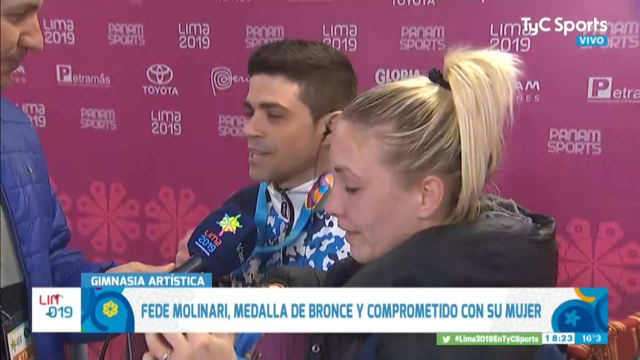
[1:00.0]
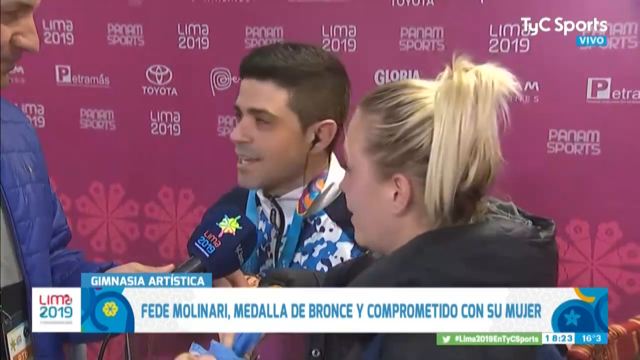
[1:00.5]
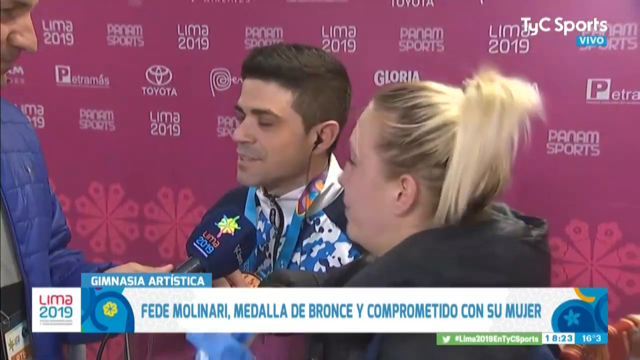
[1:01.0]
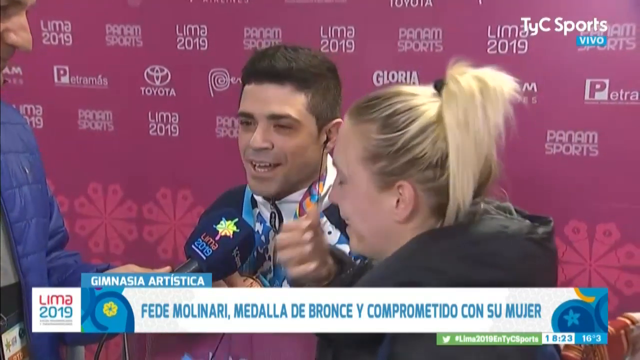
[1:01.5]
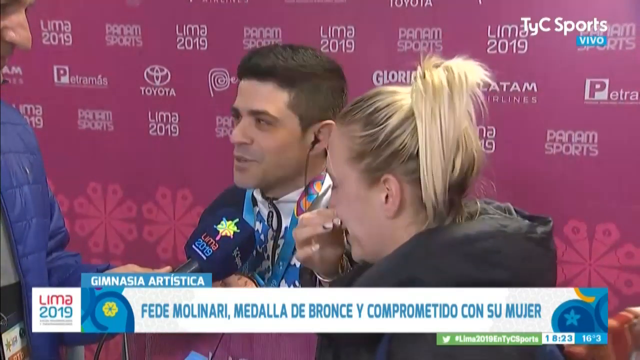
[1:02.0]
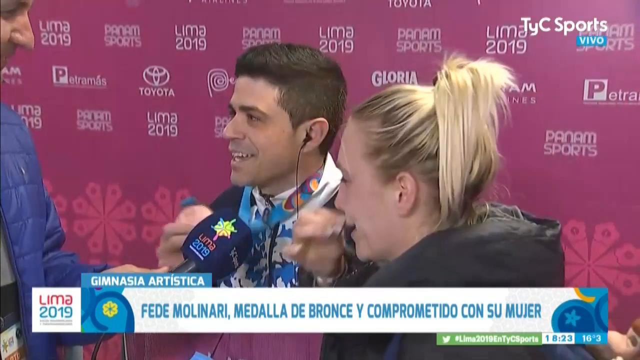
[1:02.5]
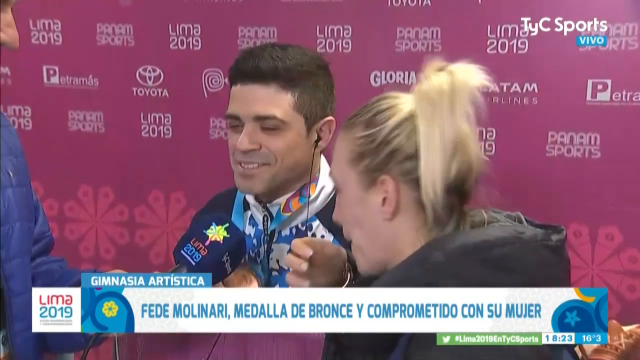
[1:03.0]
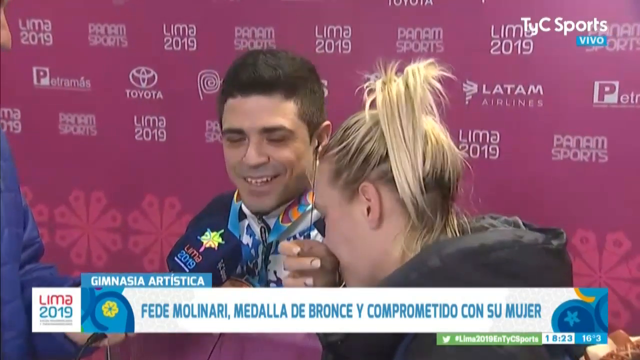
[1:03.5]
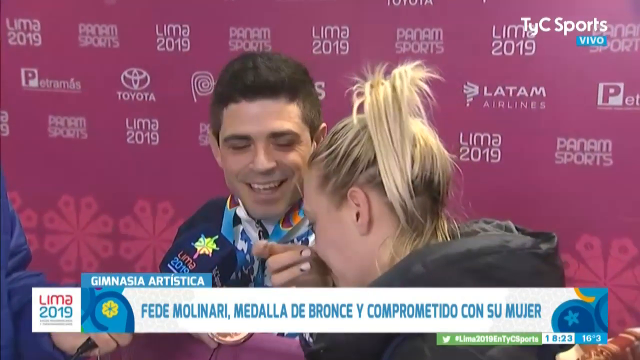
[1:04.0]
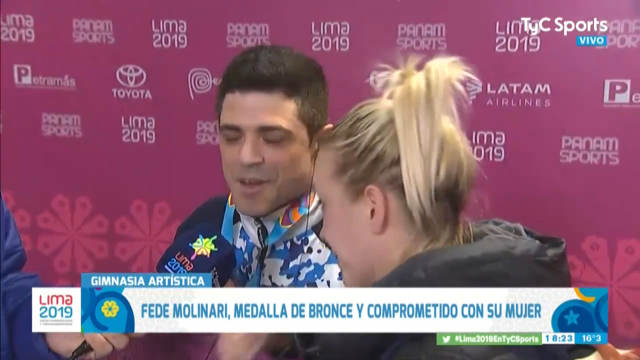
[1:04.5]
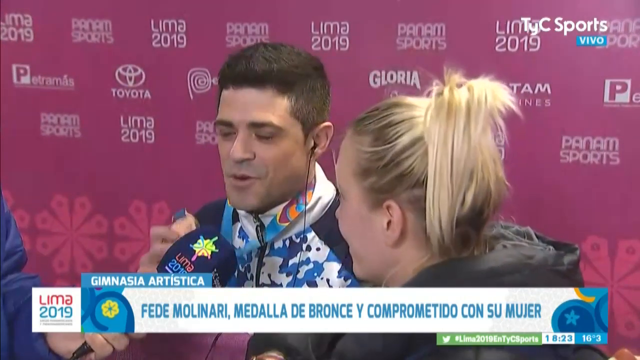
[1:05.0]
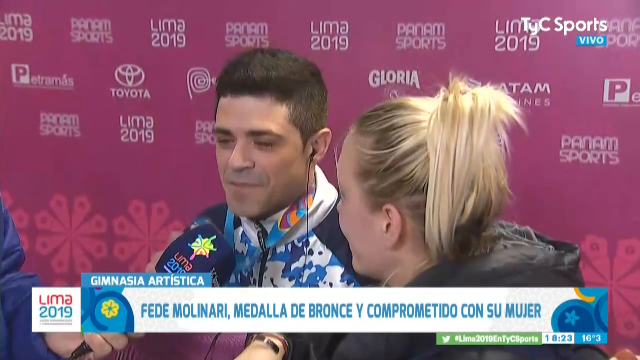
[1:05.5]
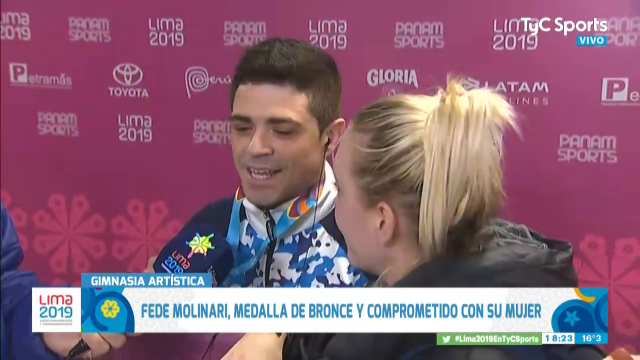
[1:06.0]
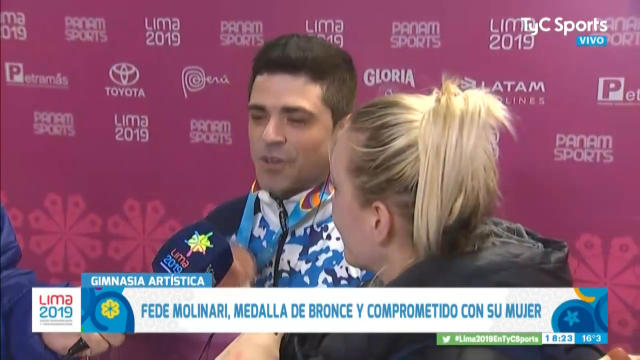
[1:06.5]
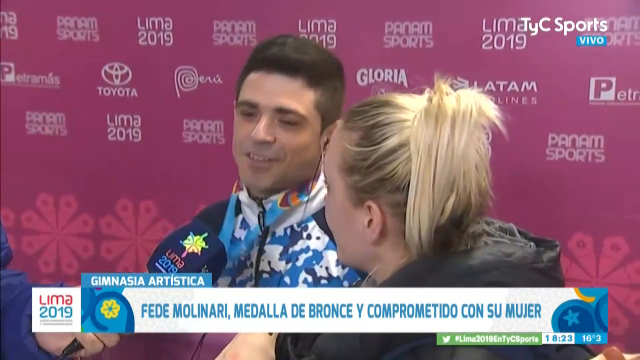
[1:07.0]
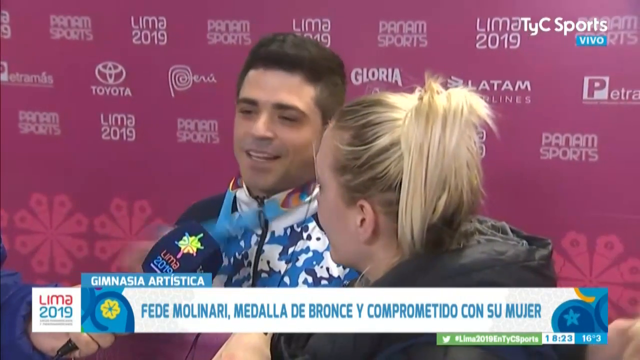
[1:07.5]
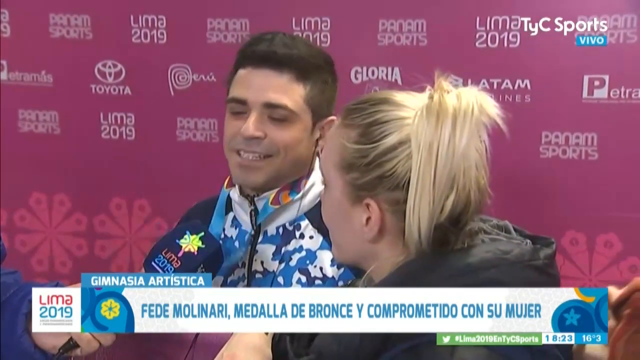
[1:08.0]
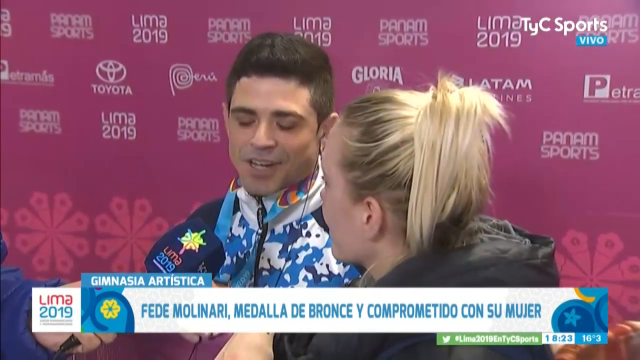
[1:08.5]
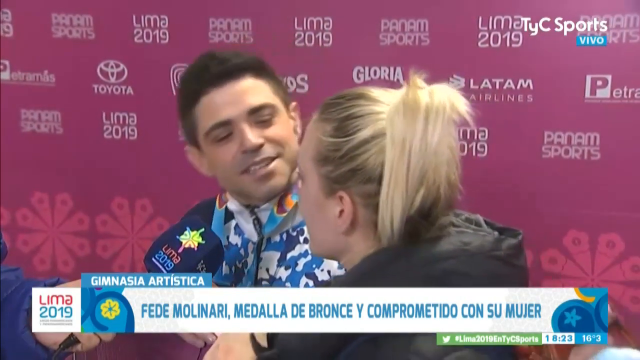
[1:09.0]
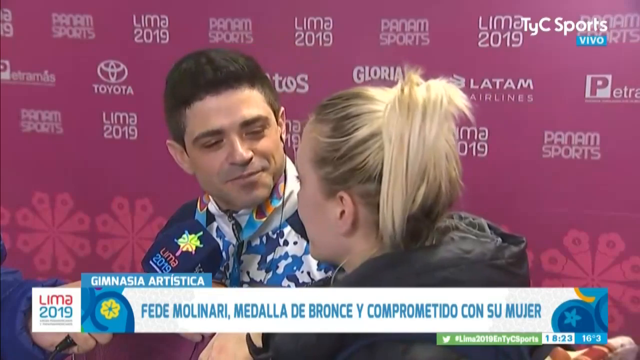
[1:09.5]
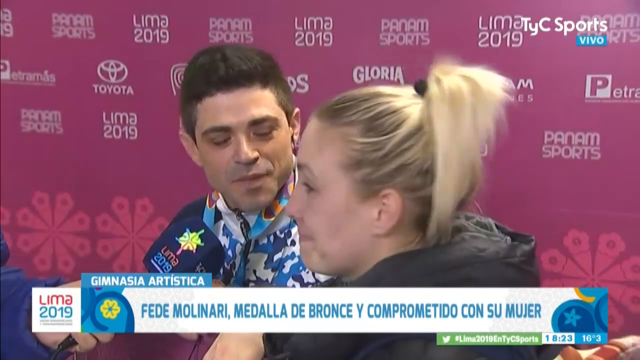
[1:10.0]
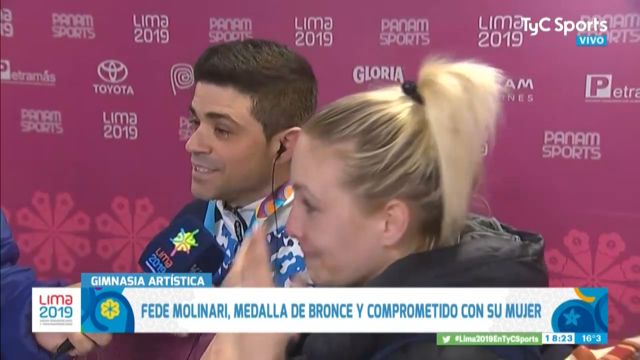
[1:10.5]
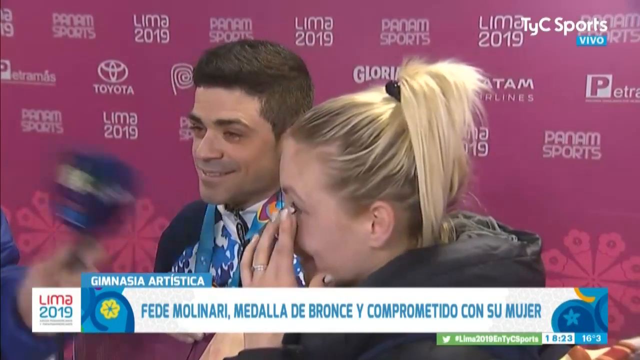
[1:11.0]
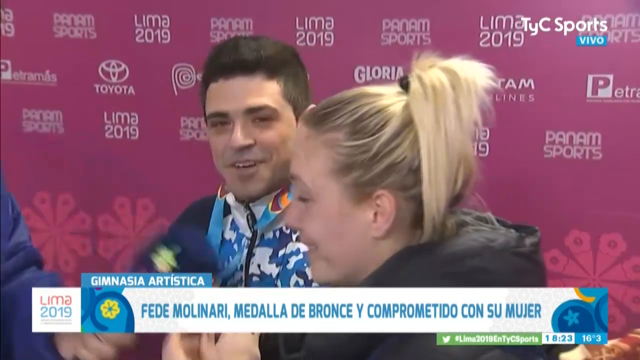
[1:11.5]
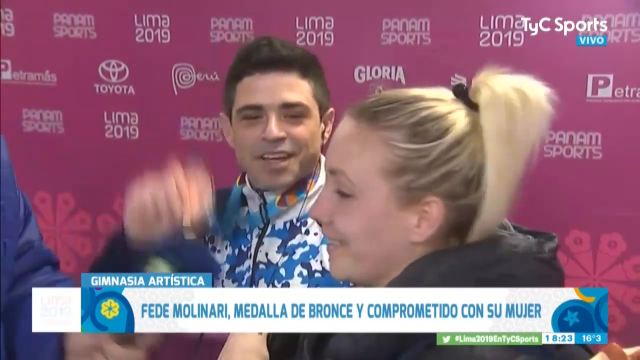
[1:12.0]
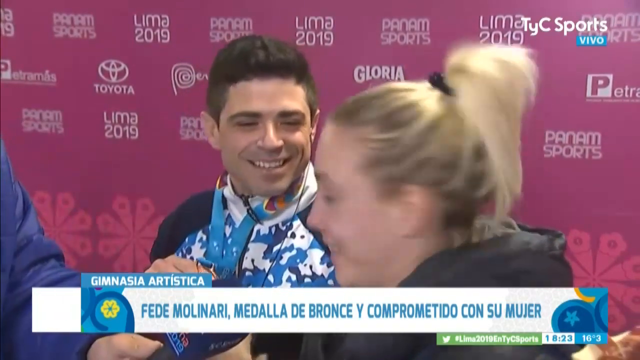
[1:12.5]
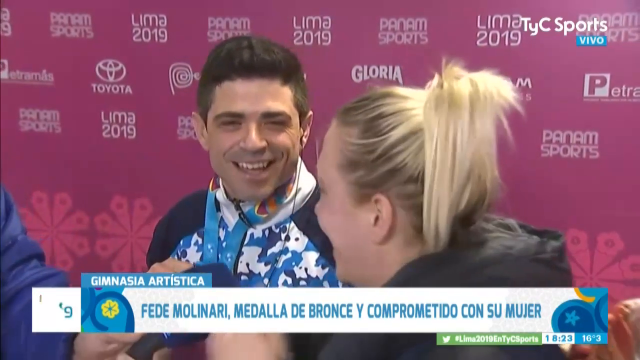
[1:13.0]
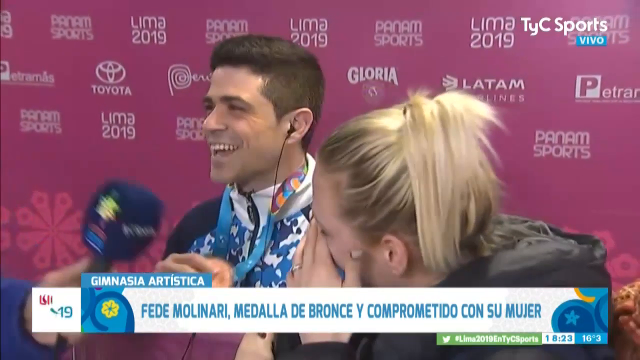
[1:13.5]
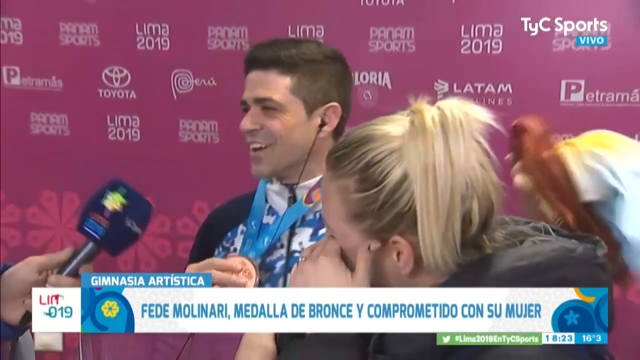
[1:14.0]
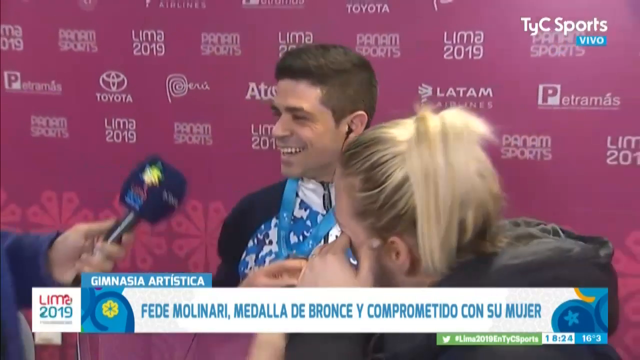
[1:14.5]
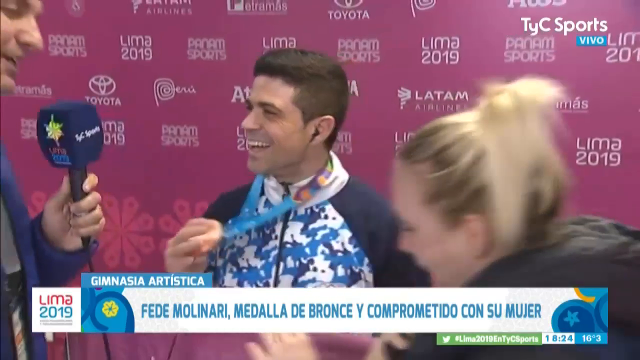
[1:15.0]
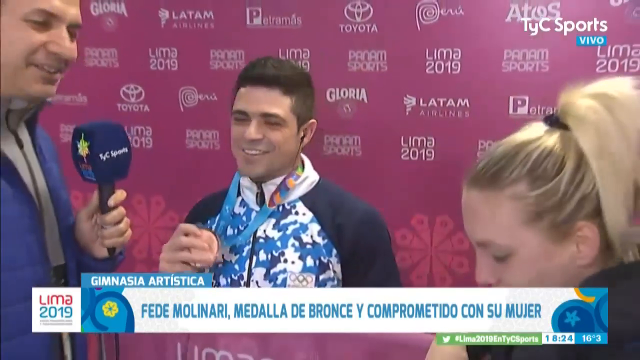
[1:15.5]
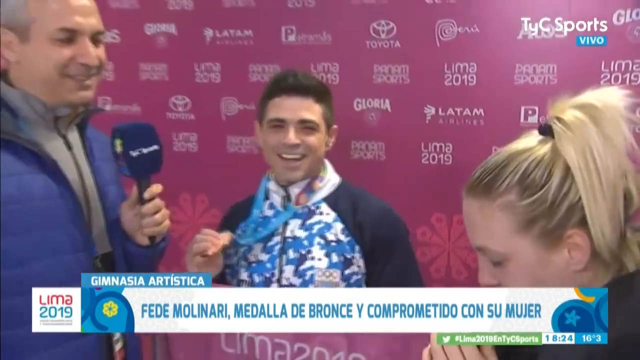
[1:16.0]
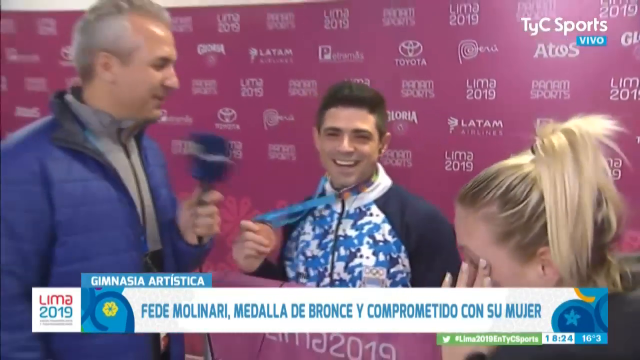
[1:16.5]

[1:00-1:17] An interview is in progress. A man talks on camera with a microphone in front of him, and he keeps waving around a gold medal in his hand, which he is putting around his neck. A woman stands next to him, appearing to be his wife or girlfriend; she is crying tears of joy and keeps wiping her eyes as he is interviewed. Toward the end, the man has a huge smile on his face and holds the gold medal up in his right hand for the camera to see. The gold medal hangs from a blue strap around his neck. A poster board behind them has logos and sponsors on it, and one of the logos says "Lima 2019." On the left, a taller man holds the microphone and interviews the man standing behind the banner, while the woman stands next to him celebrating and crying.